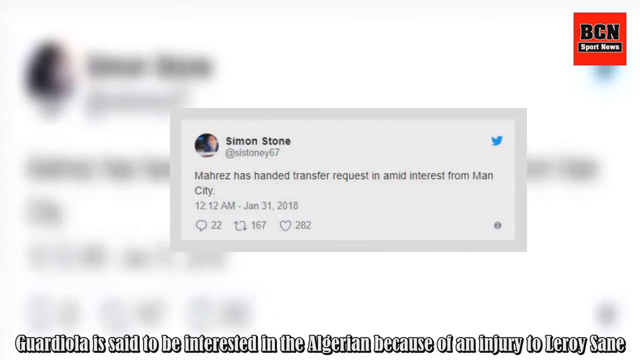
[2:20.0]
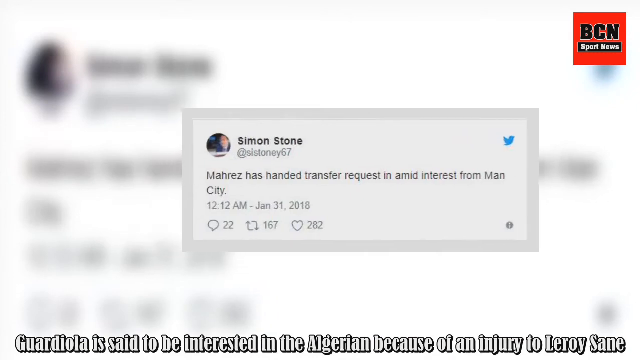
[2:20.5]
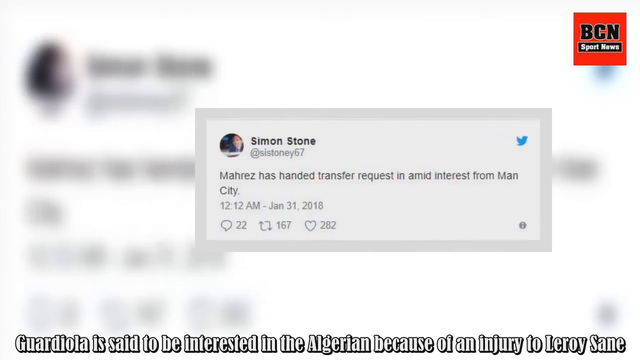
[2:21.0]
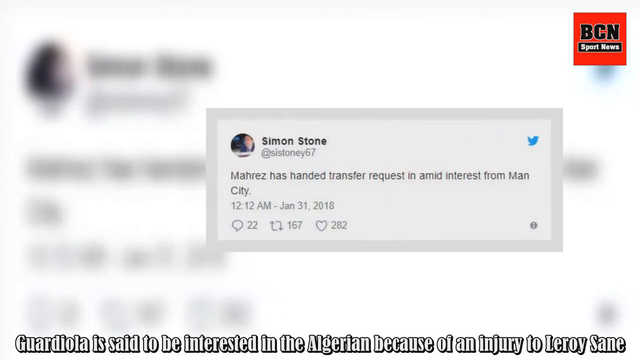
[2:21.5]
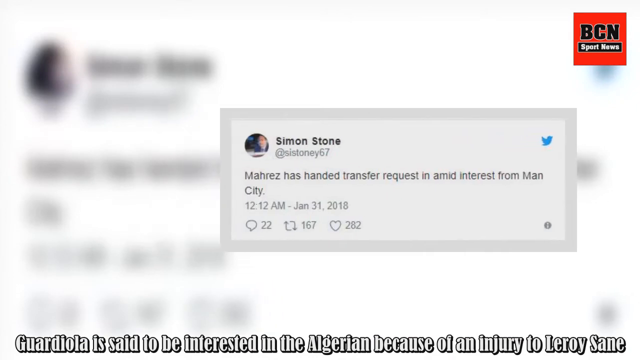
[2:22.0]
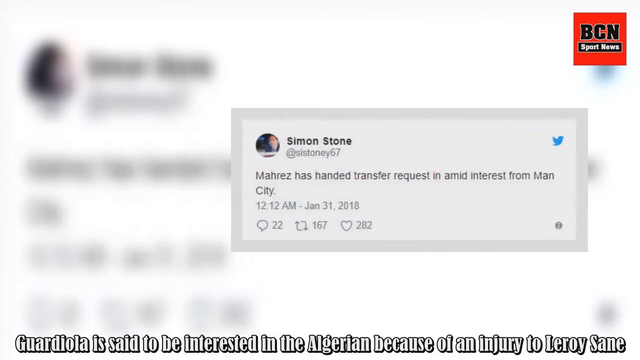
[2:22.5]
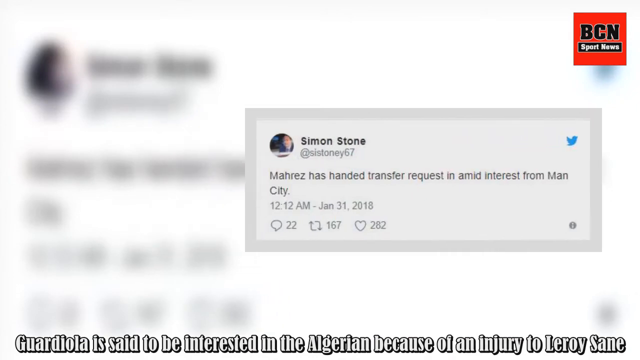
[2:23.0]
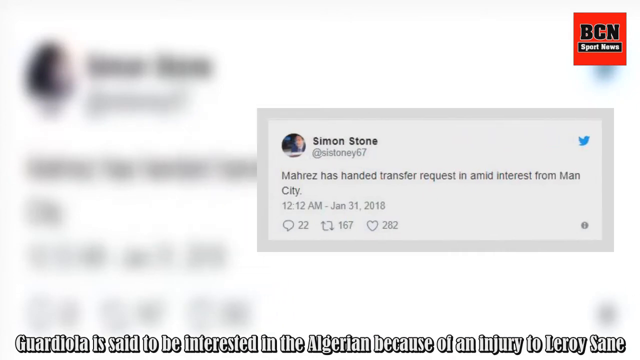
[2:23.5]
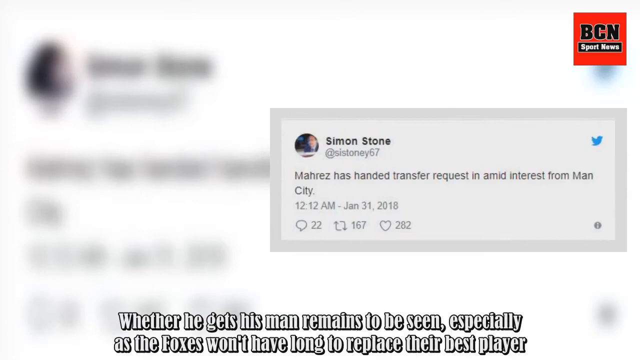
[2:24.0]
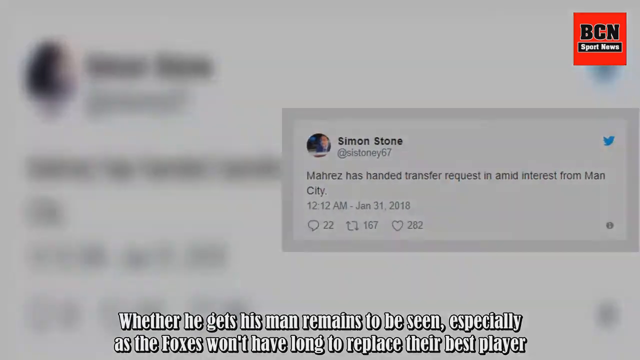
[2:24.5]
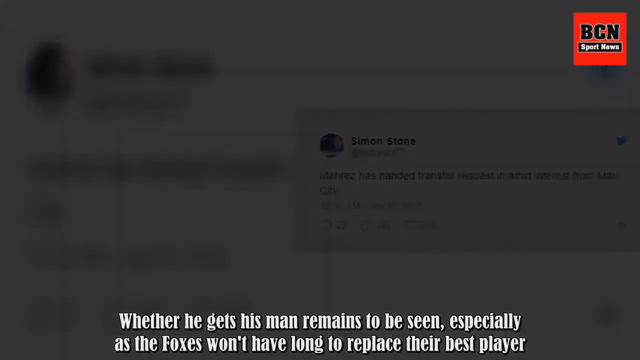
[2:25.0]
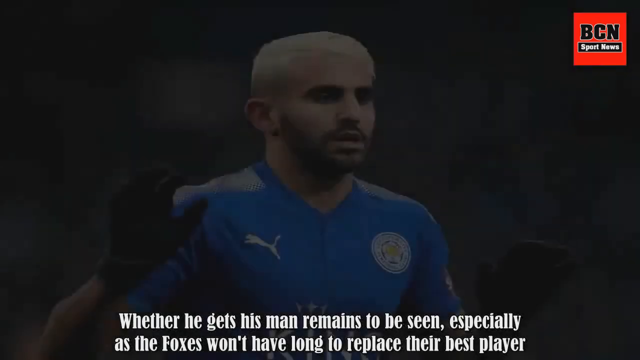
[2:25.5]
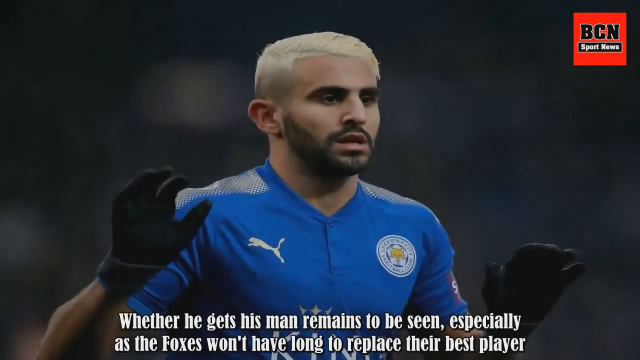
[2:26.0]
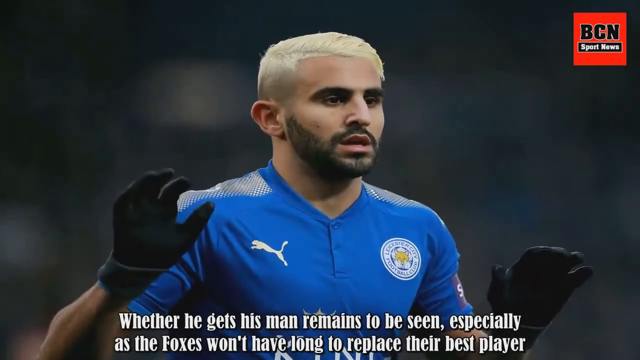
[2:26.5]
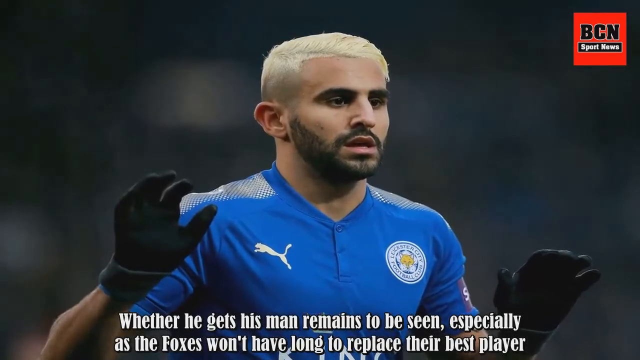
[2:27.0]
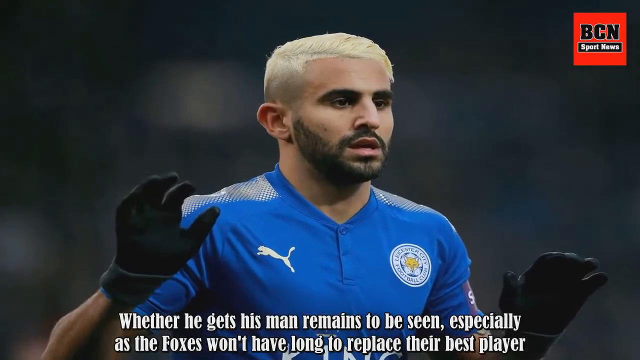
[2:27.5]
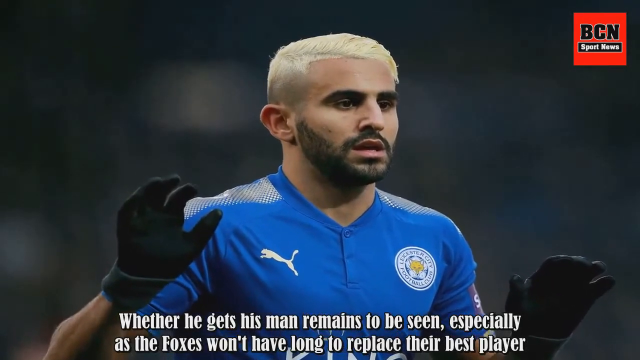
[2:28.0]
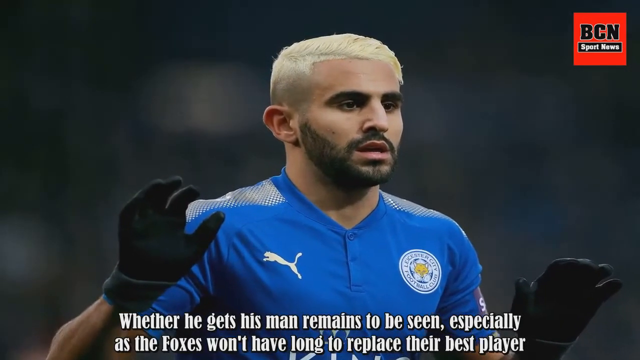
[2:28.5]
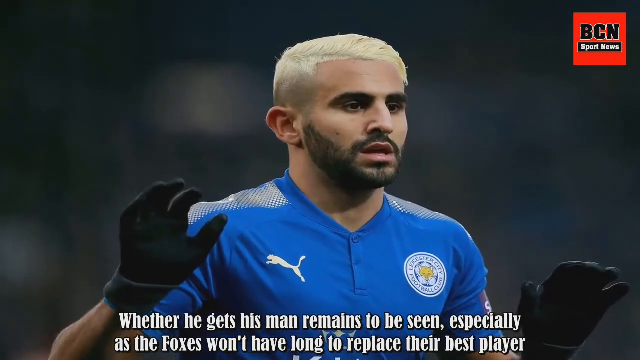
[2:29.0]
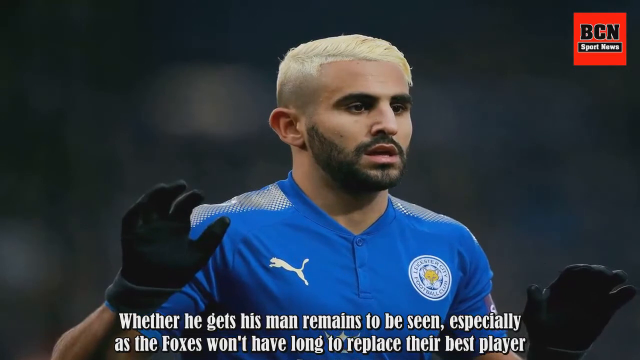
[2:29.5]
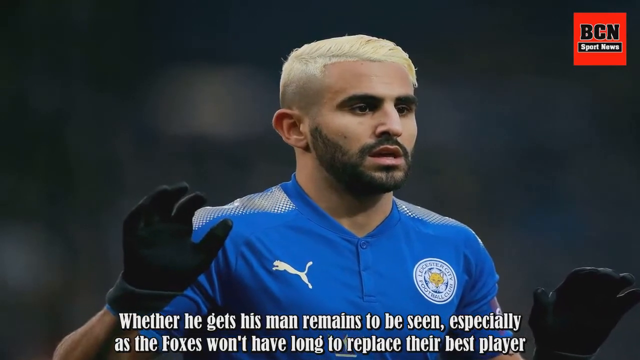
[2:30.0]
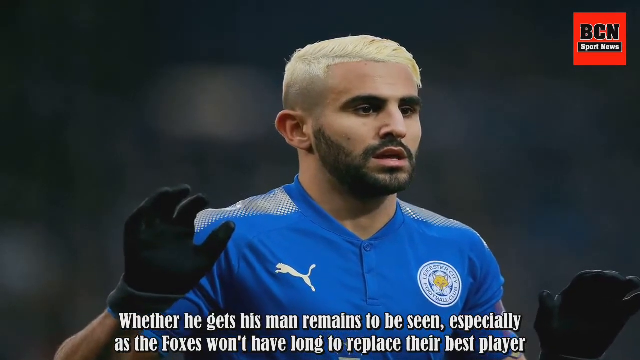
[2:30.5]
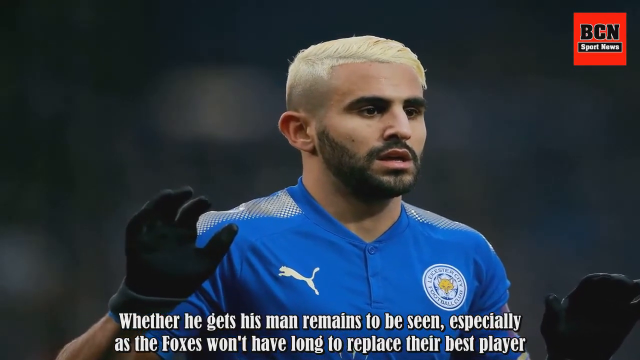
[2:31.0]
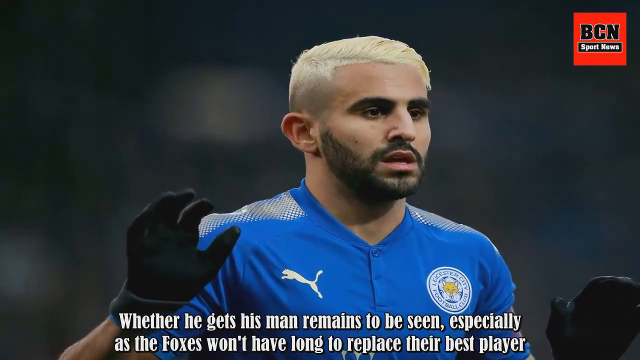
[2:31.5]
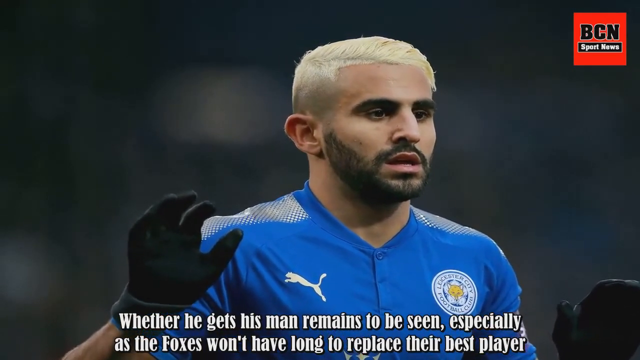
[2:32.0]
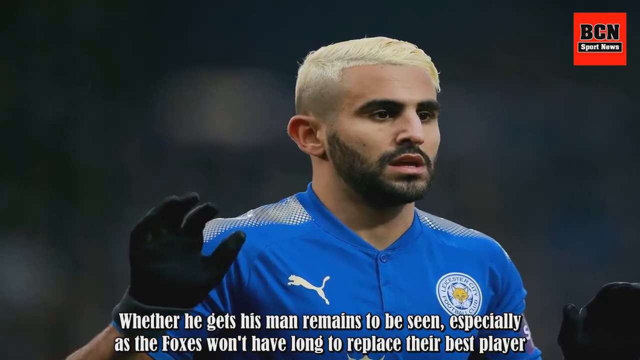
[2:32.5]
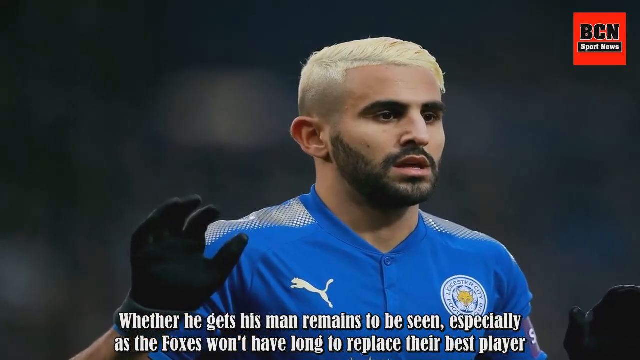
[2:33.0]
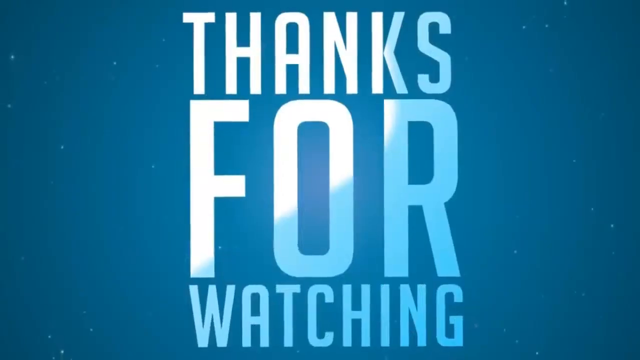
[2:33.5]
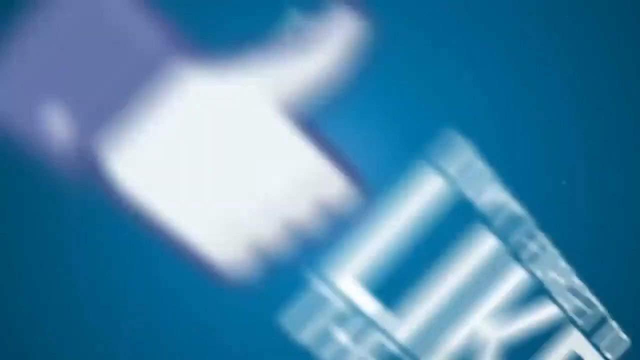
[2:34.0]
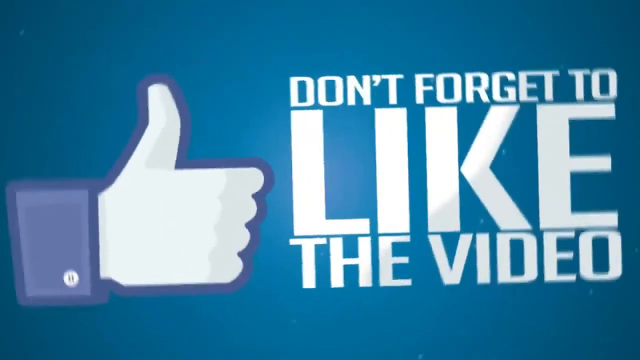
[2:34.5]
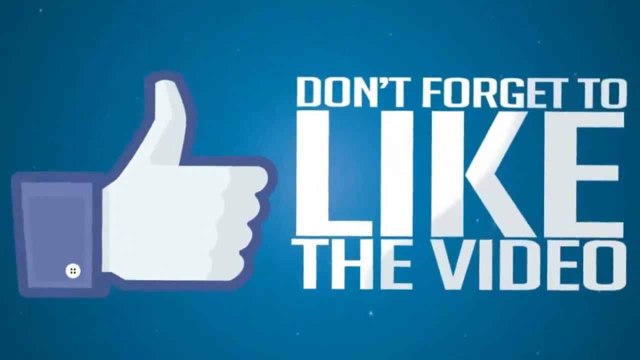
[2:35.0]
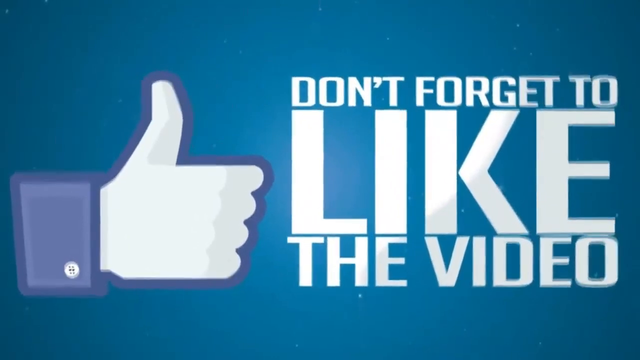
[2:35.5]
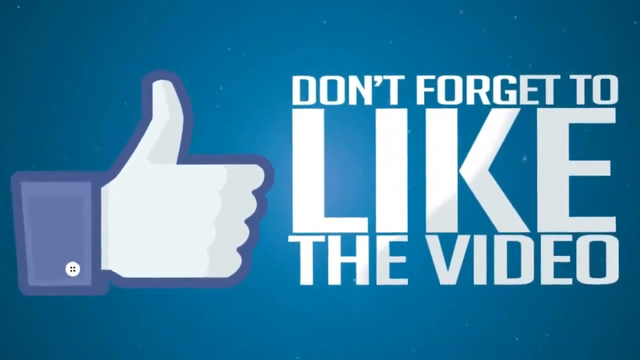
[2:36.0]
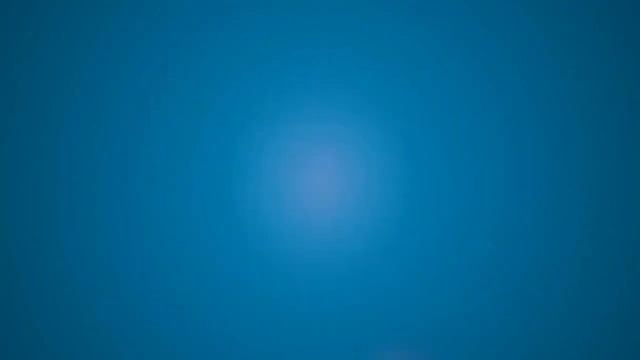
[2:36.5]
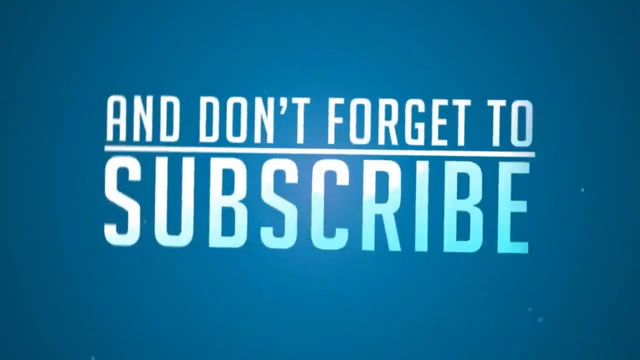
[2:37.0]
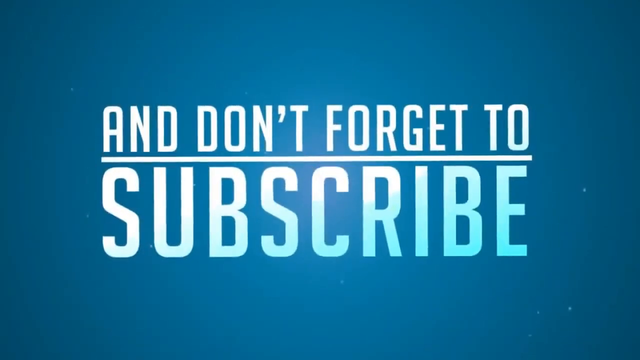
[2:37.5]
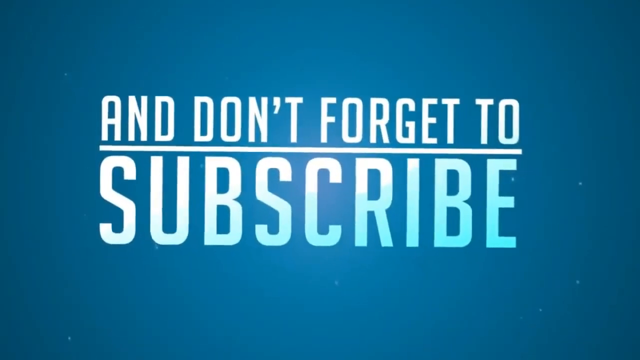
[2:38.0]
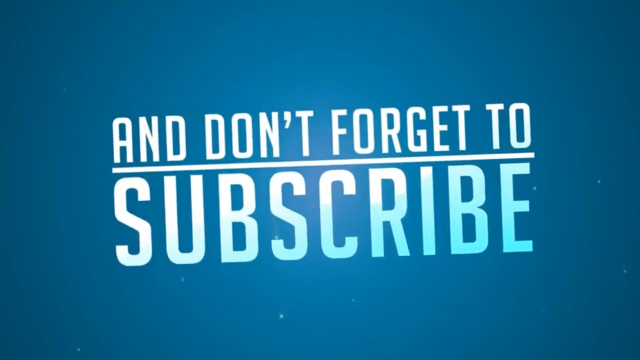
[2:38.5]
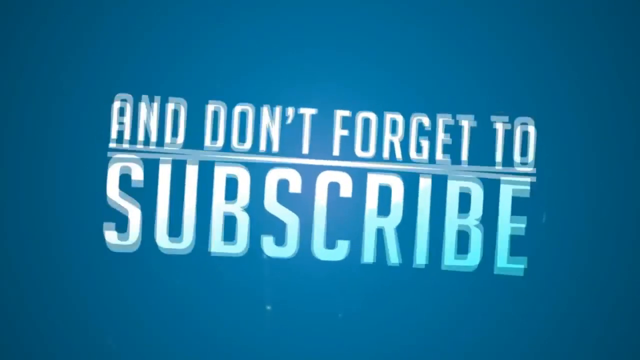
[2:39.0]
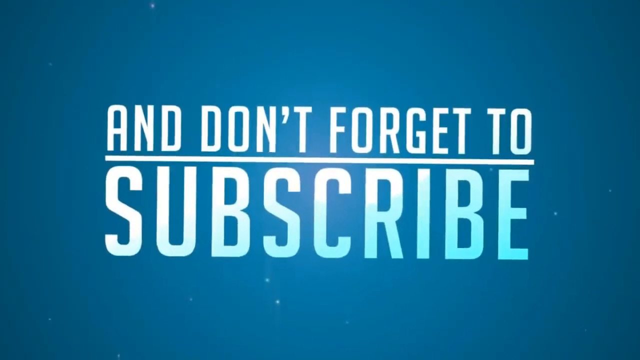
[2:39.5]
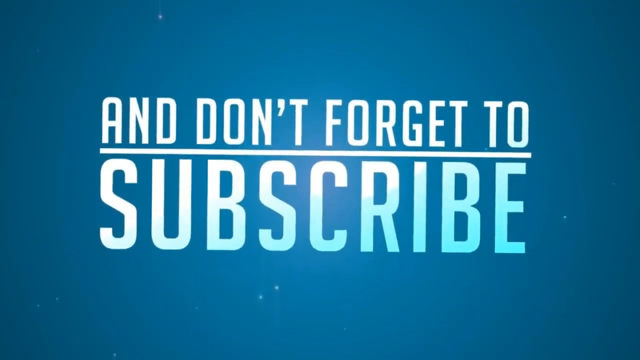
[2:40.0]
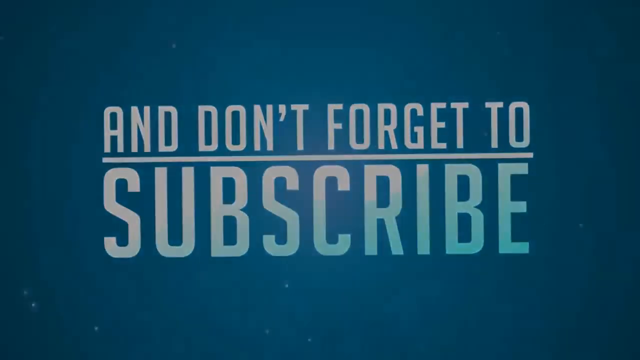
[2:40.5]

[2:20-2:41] A tweet moves across the screen from left to right. It is a post from Twitter user Simon Stone about a transfer request and interest from a City club, dated 2018. The blue Twitter bird is in the top right of the tweet, and the background is completely blurry. In the top right of the screen is the BCN Sports News logo, black text over a red square. White text runs along the very bottom of the screen.